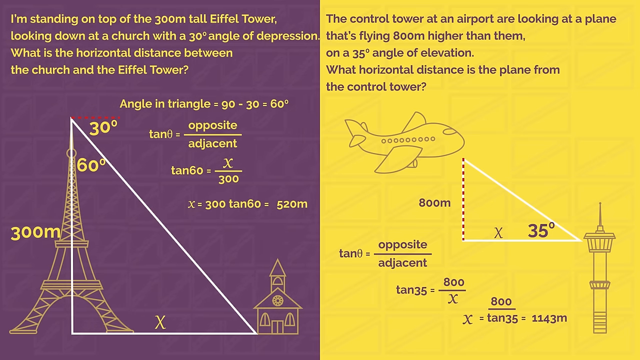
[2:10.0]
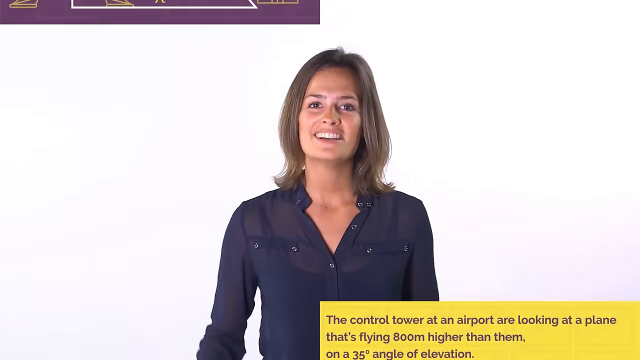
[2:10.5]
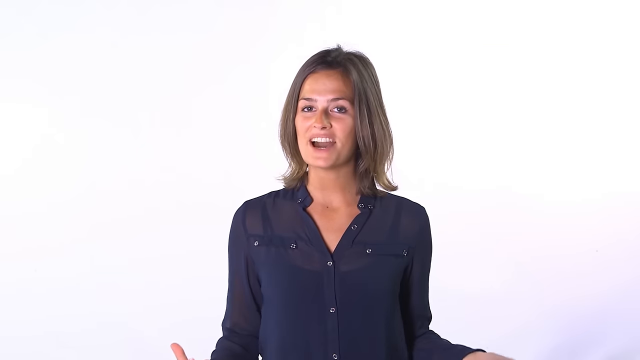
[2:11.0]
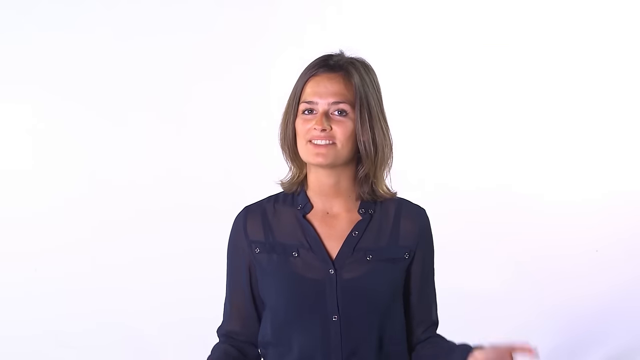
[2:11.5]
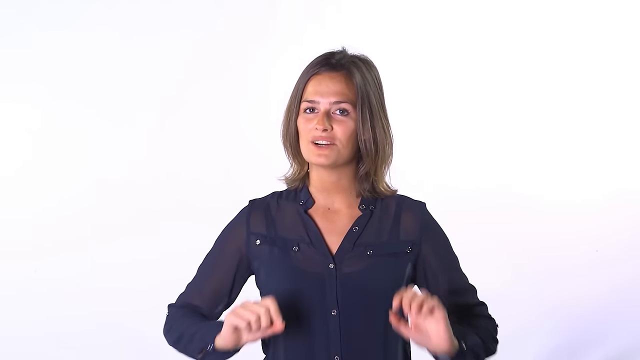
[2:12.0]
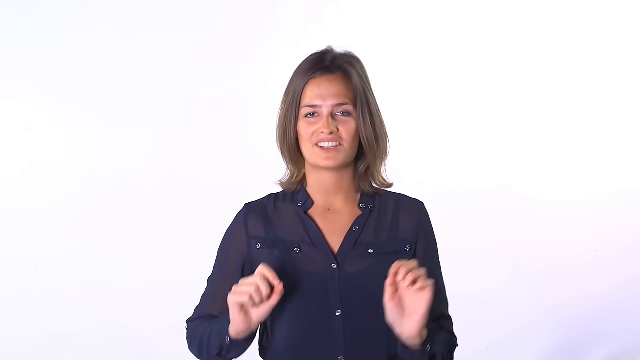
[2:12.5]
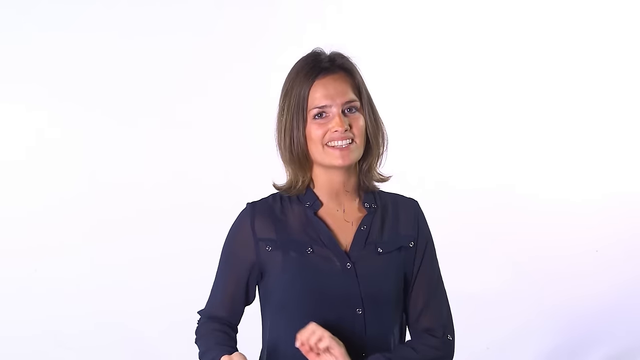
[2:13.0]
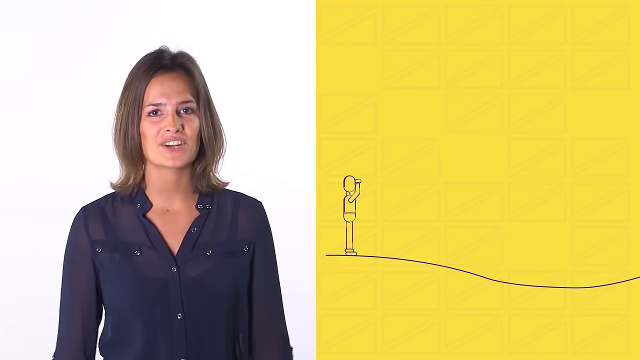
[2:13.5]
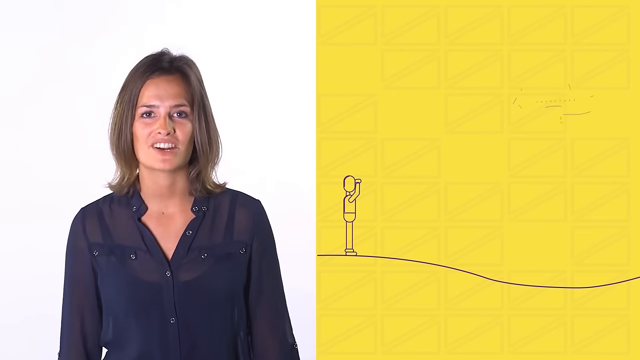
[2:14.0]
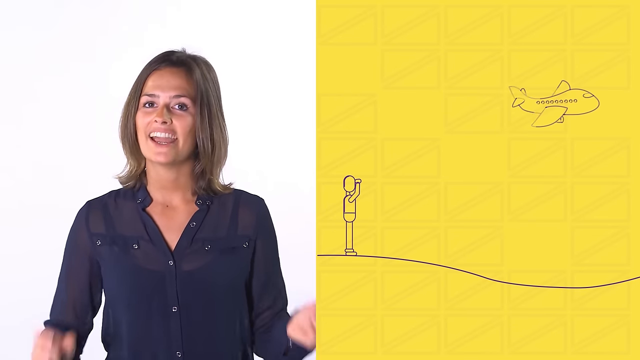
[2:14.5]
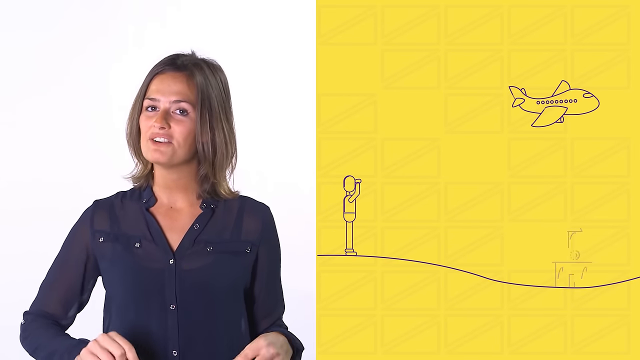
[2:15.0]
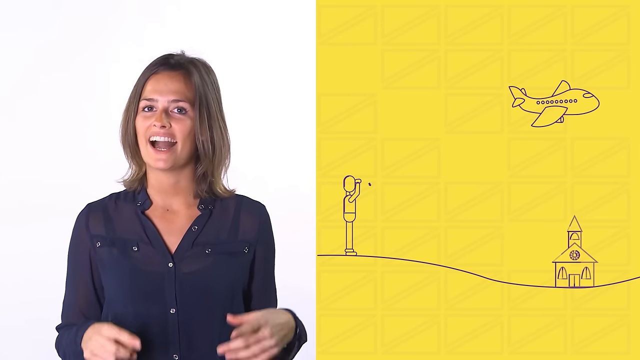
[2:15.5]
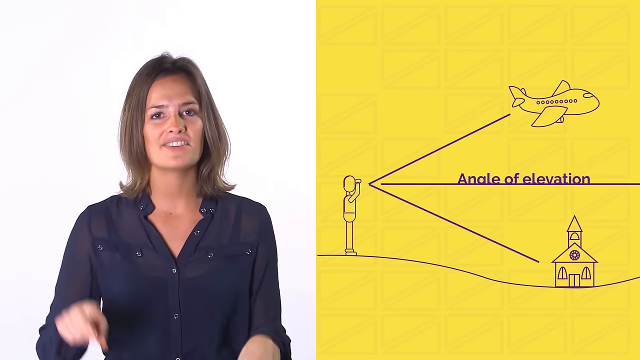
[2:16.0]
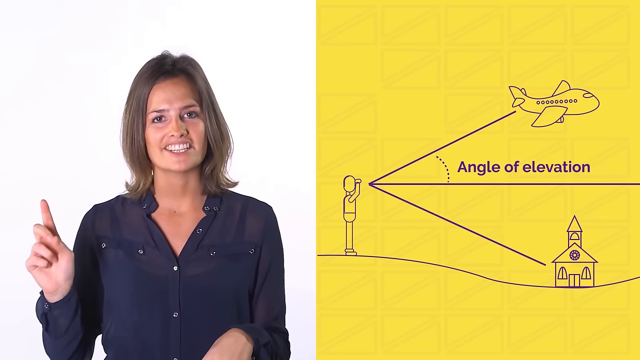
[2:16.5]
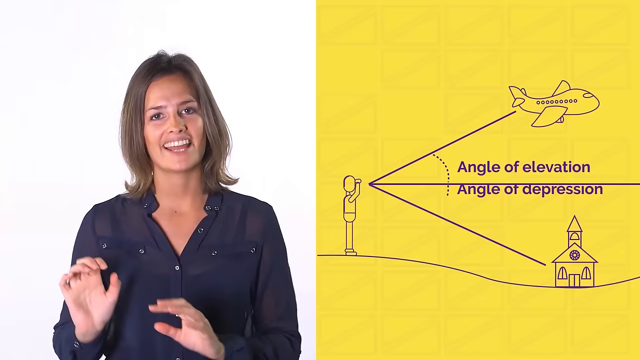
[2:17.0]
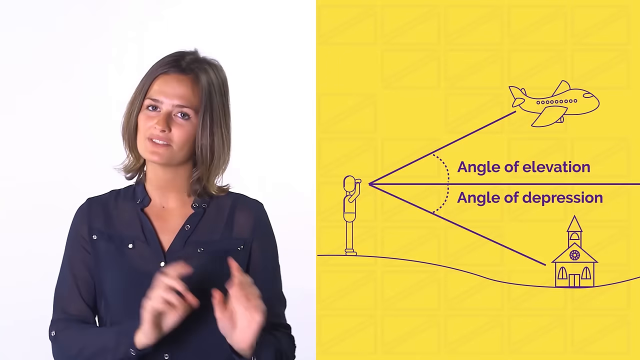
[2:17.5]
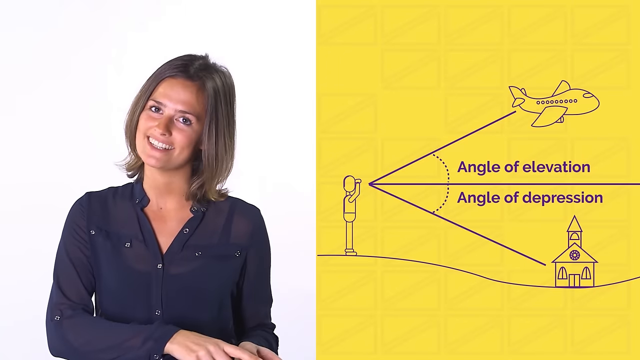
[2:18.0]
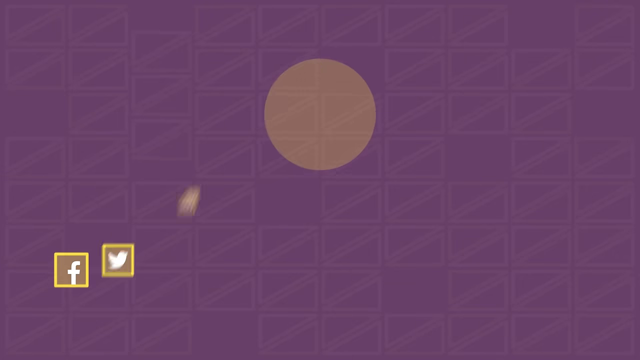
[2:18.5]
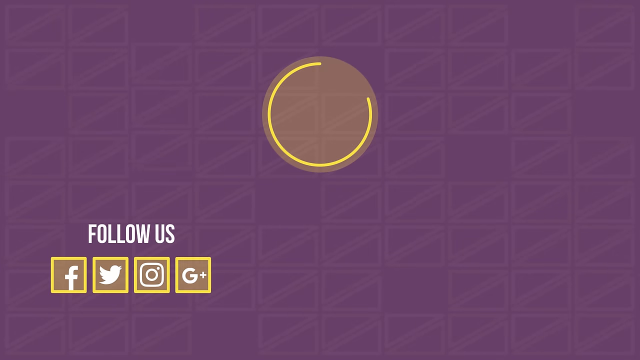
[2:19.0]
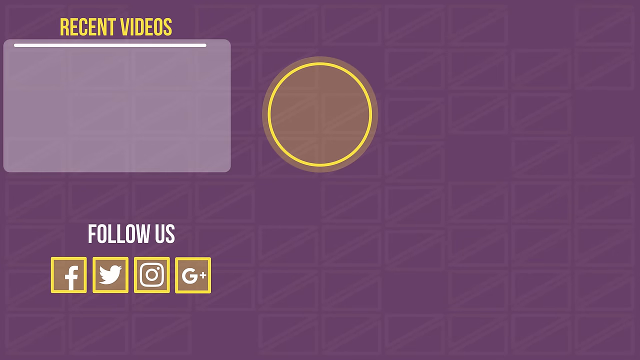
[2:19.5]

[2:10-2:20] On the other side, a white triangle connects the plane to the tower, its height shown as 800 meters and the angle as 35 degrees, and TAN is used to calculate the horizontal distance. The screens slide away and the woman is speaking again. She brings her hands up in front of her chest with palms facing her body, briefly showing the backs of her hands, then drops them; she repeatedly raises and lowers her hands as she speaks. She is then moved to the left side of the screen, while on the right a yellow background shows the figurine looking up at an airplane and down at the schoolhouse. She lifts her right hand with the palm facing the camera, her thumb holding three fingers and her index finger pointing straight up. She then puts both hands next to each other and gestures off to her left with both hands.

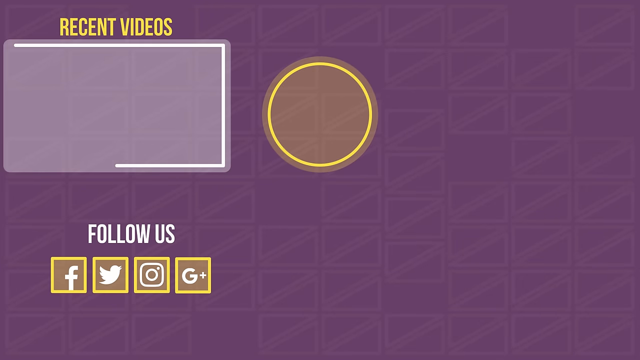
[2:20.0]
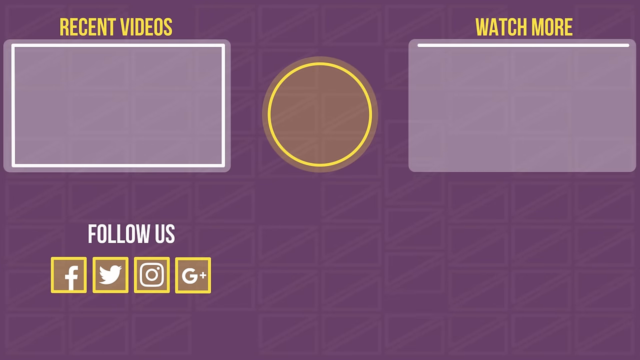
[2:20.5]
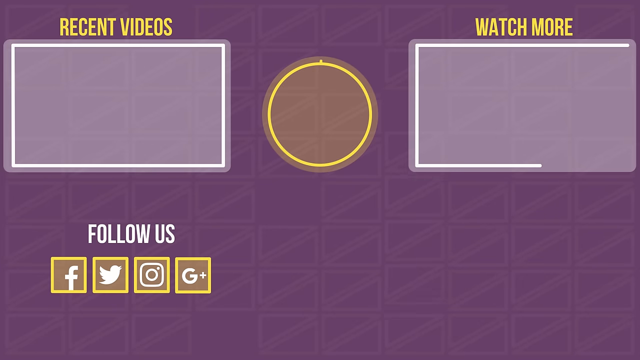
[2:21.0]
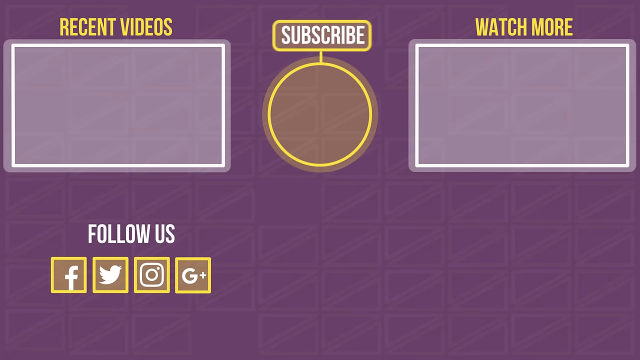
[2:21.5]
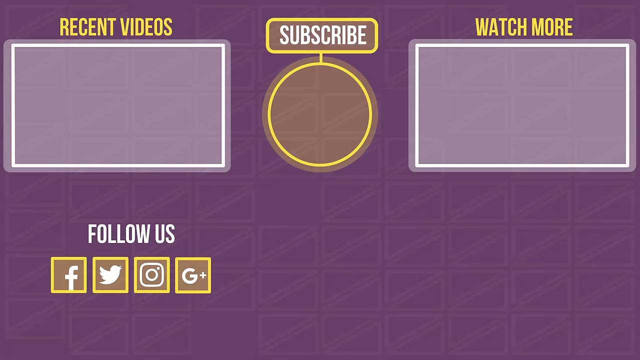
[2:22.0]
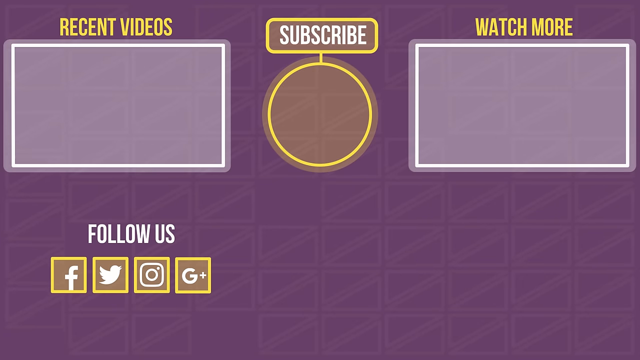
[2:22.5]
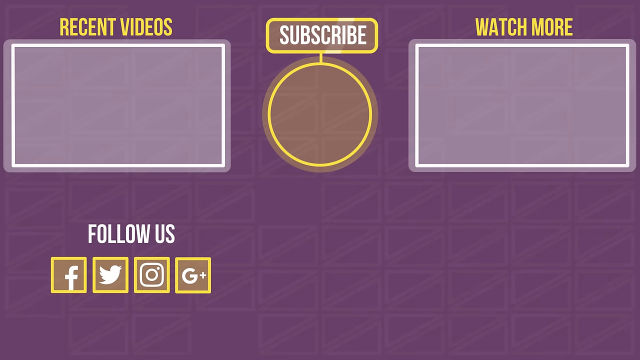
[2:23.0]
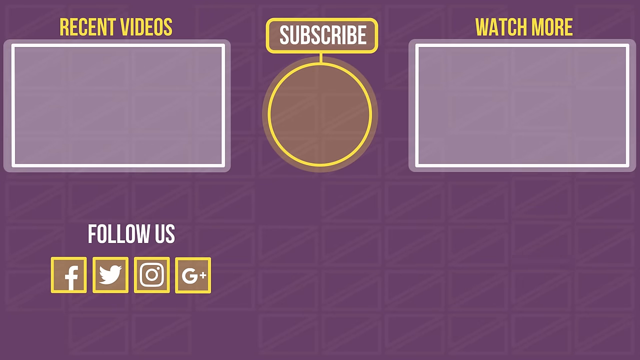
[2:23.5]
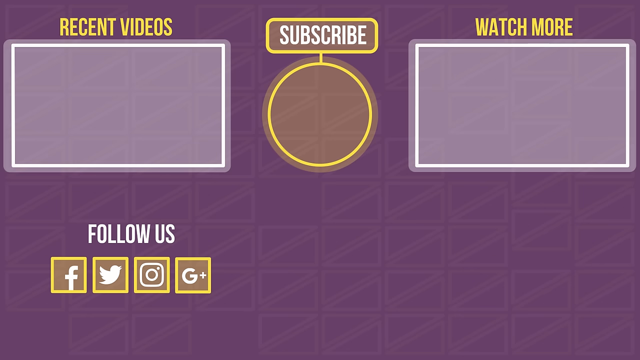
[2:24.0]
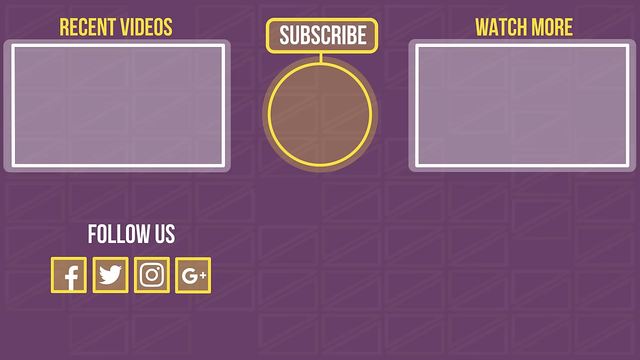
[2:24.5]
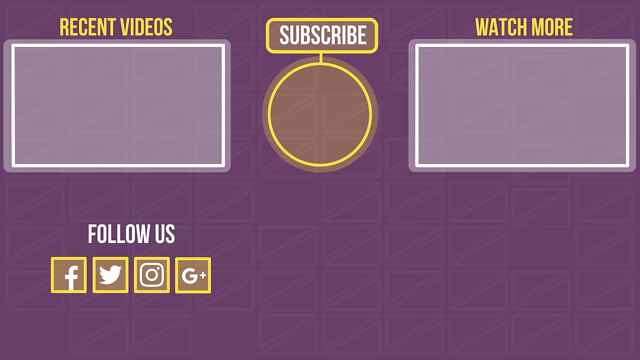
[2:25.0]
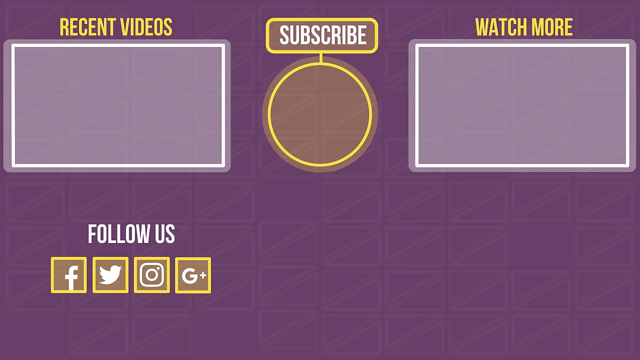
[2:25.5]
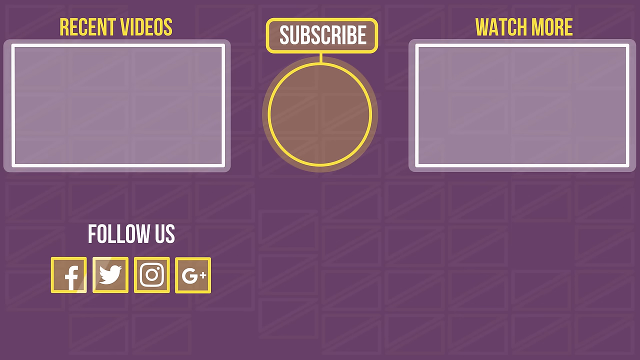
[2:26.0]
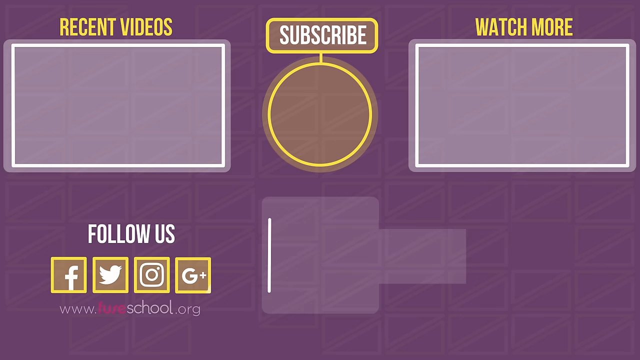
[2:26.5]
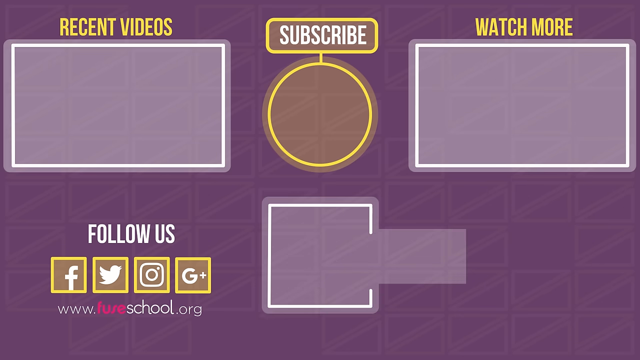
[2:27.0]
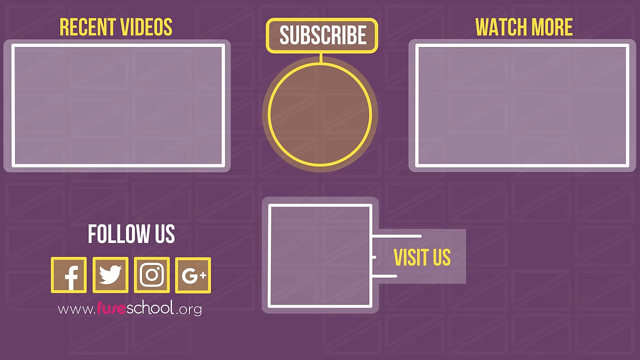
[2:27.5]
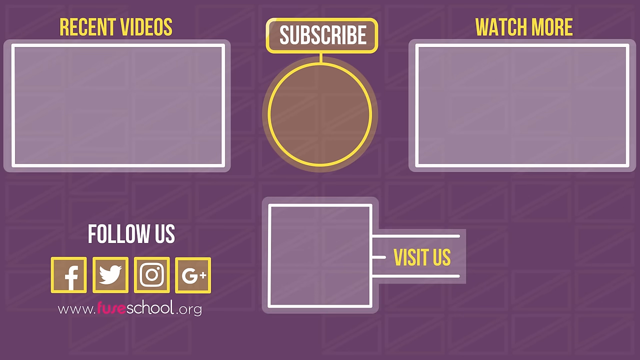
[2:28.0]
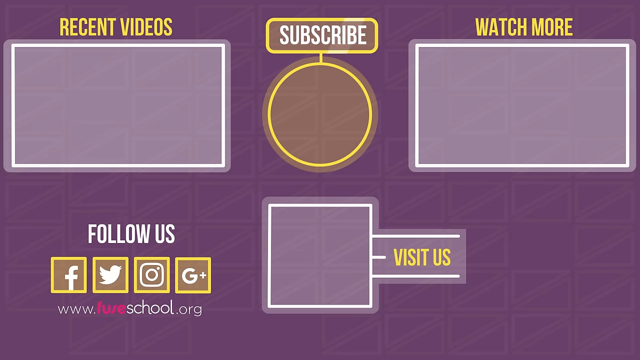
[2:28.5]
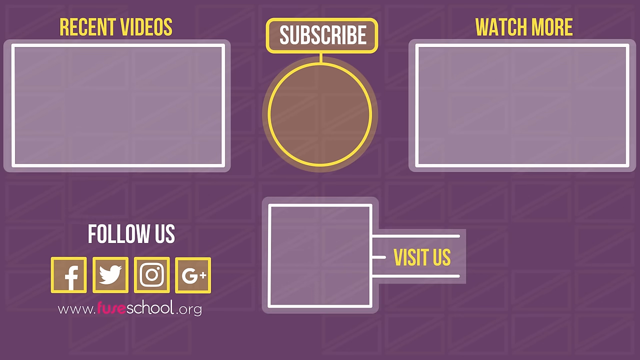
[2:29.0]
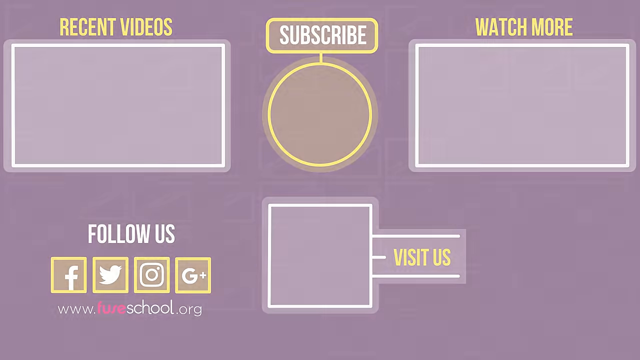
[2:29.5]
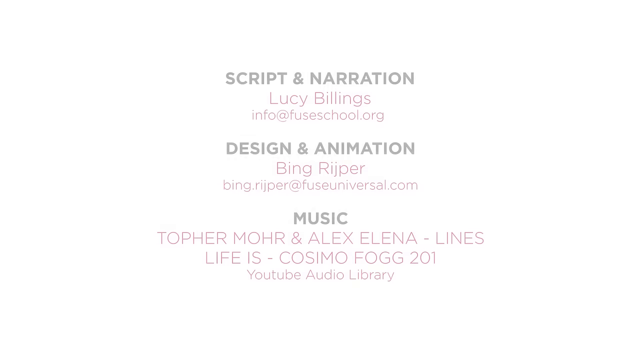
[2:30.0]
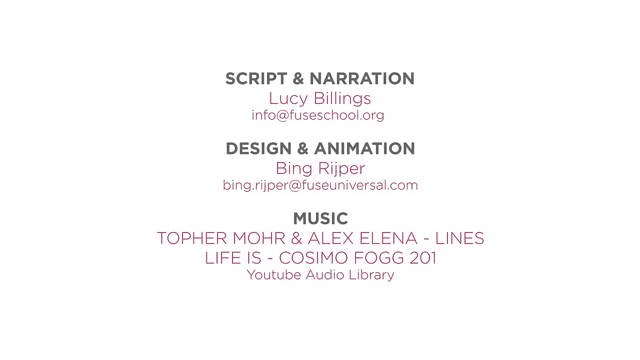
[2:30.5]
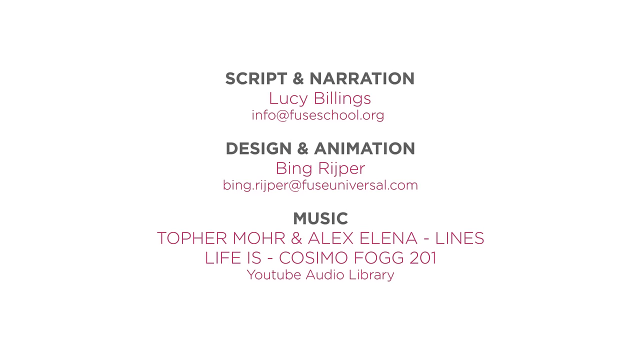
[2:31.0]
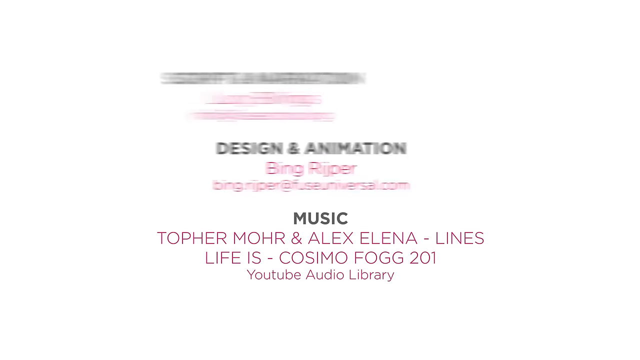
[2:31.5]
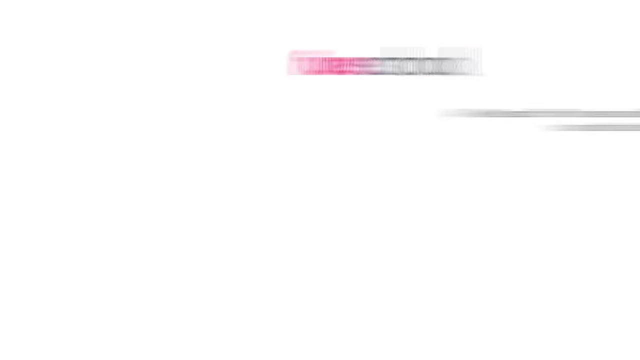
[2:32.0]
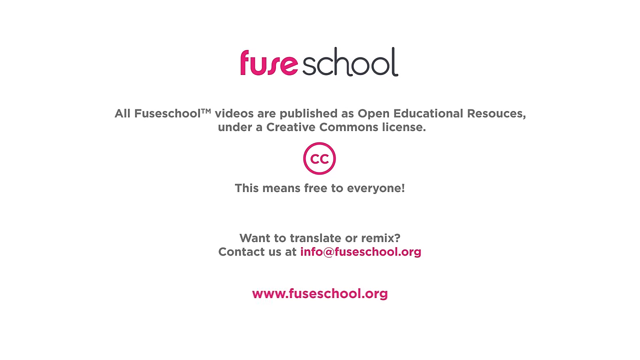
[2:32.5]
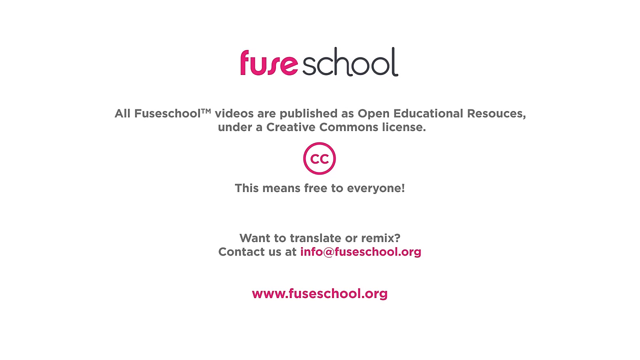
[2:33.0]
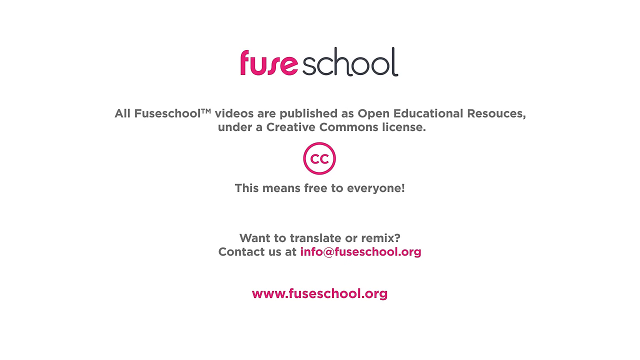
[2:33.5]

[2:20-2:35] A conclusion page appears on the purple background. In the upper left is "Recent Videos" with a rectangle under it, and on the right is "Watch More" with a rectangle under it; both rectangles are empty. In the middle is an empty circle with "Subscribe" above it. In the lower left are social media icons for Facebook, Twitter, Instagram, and Google+. A "Visit Us" button is rendered in the bottom center, and the website address for the Fuse School appears.